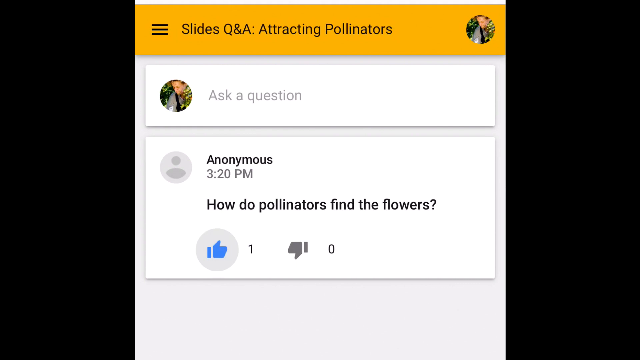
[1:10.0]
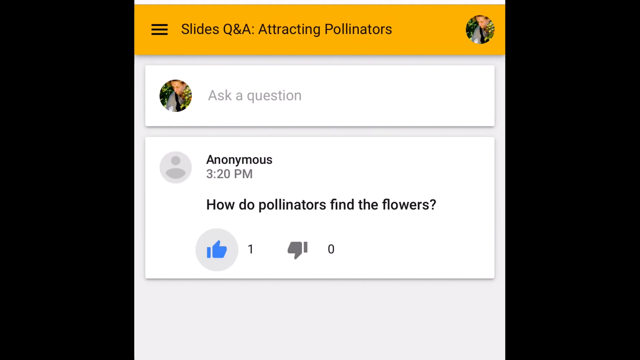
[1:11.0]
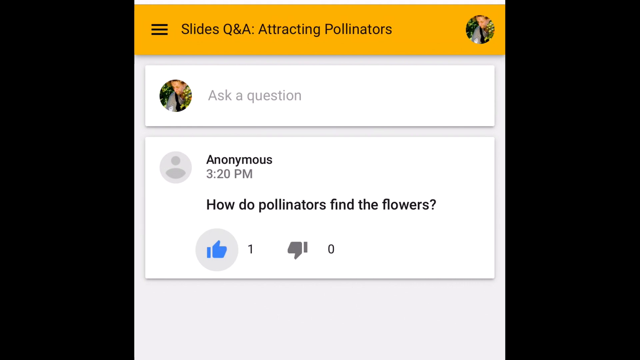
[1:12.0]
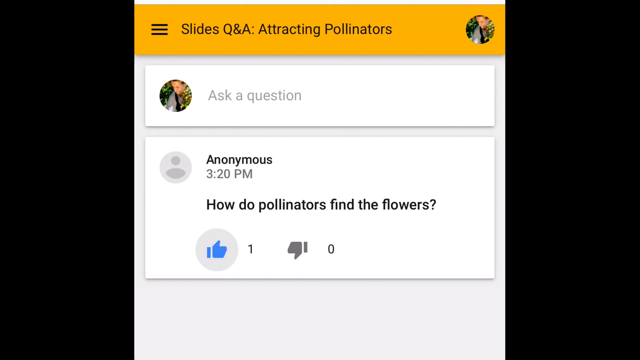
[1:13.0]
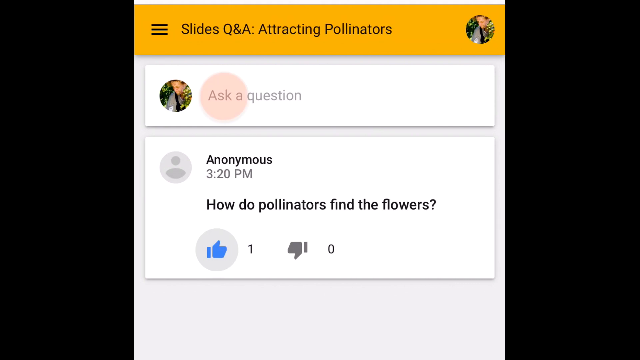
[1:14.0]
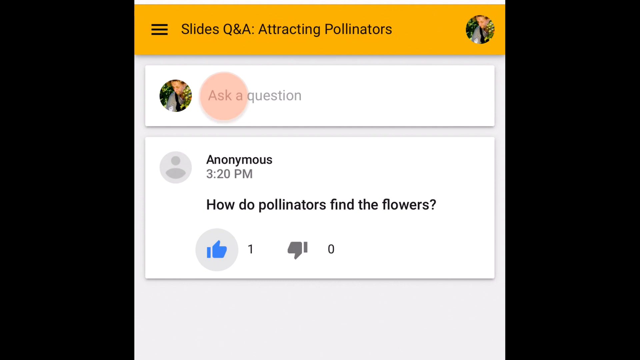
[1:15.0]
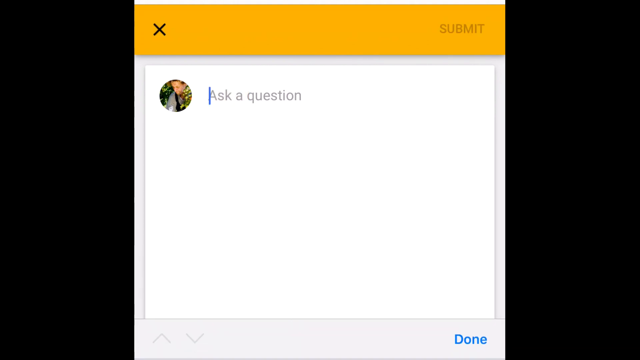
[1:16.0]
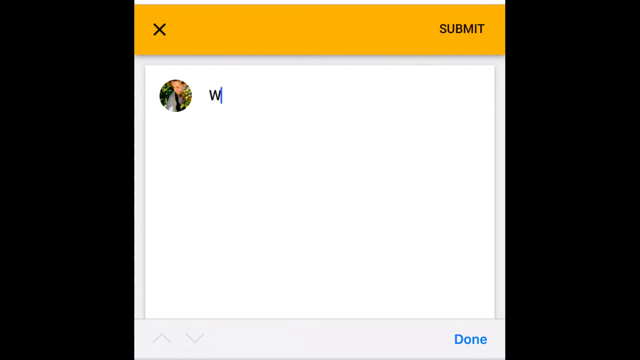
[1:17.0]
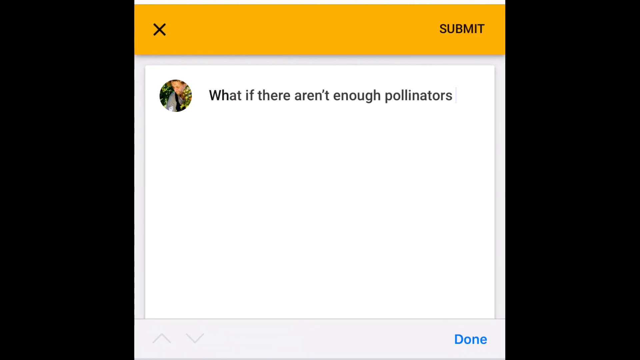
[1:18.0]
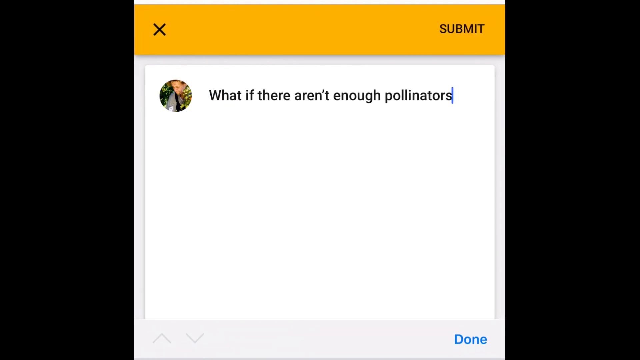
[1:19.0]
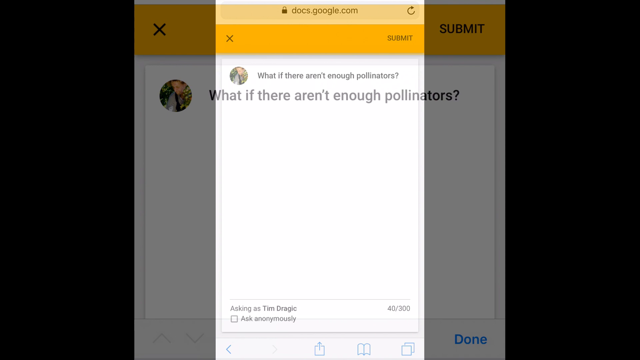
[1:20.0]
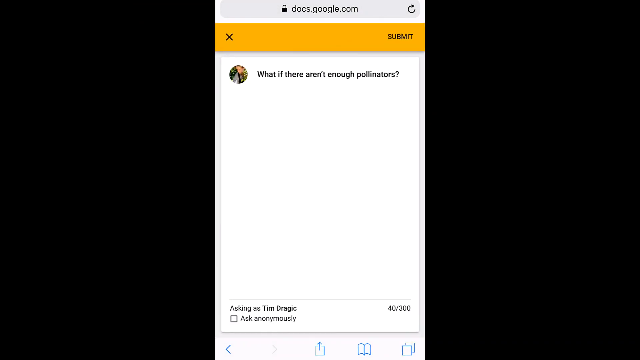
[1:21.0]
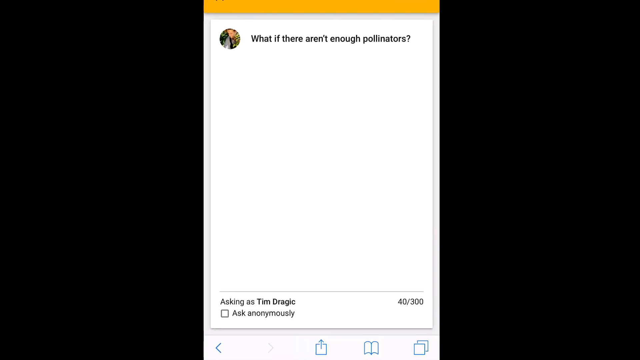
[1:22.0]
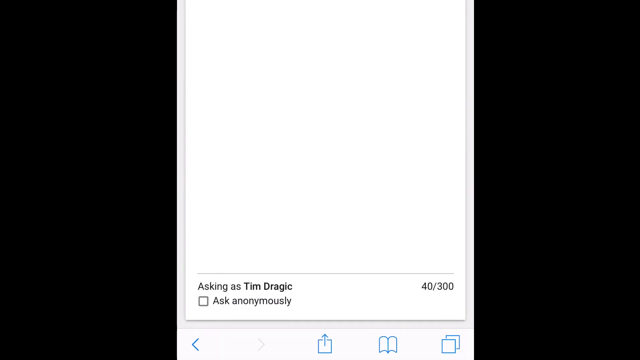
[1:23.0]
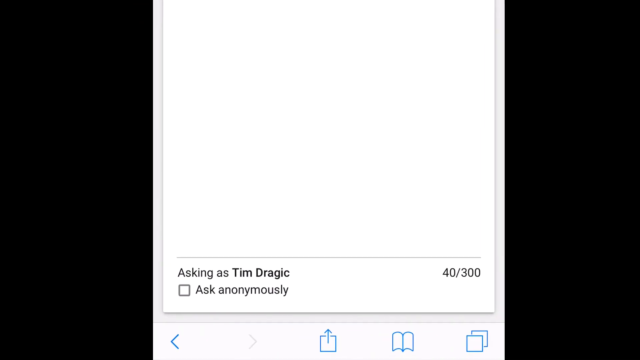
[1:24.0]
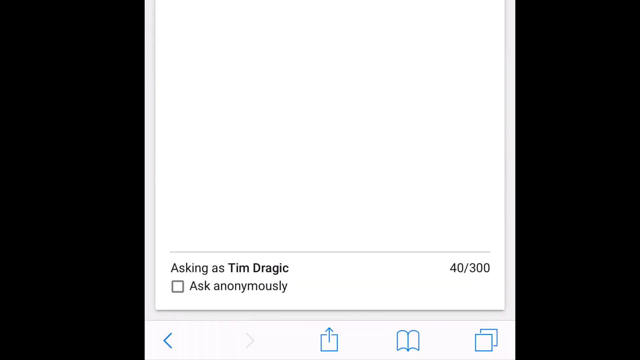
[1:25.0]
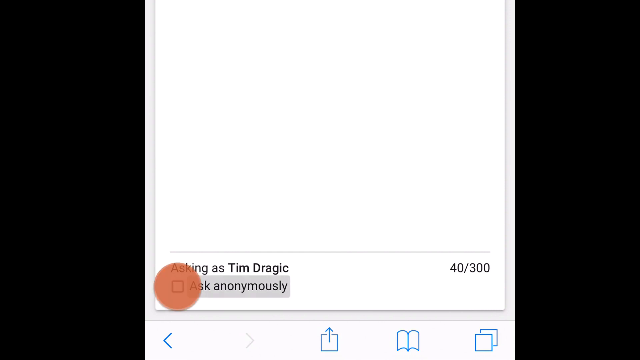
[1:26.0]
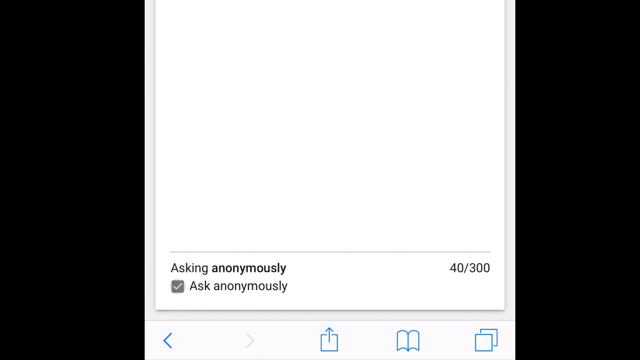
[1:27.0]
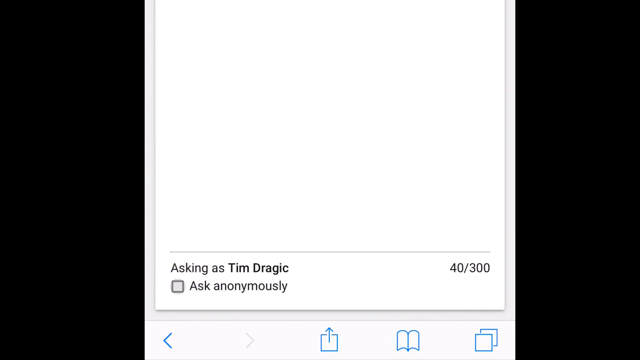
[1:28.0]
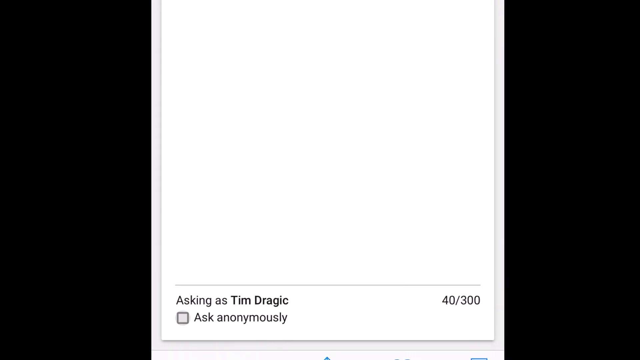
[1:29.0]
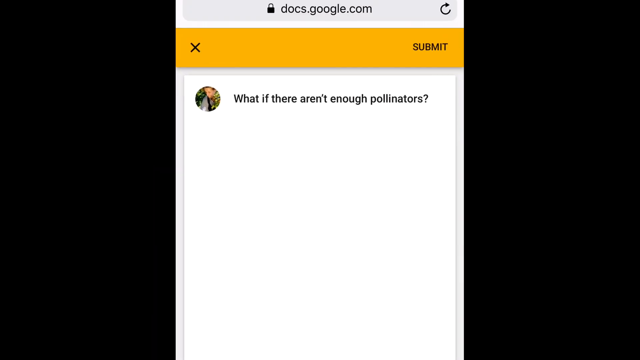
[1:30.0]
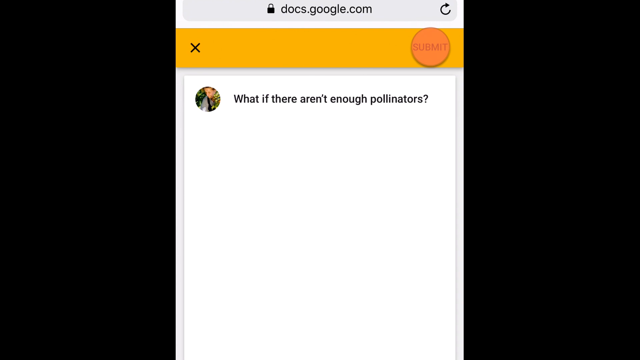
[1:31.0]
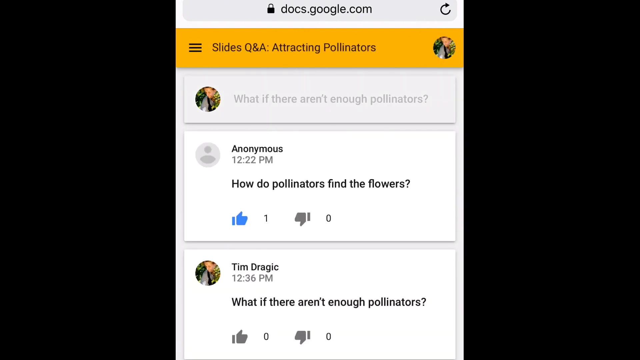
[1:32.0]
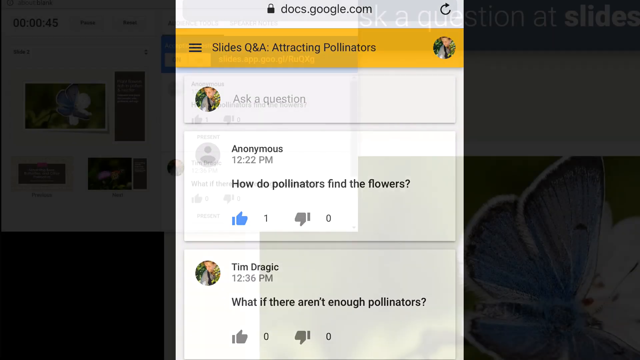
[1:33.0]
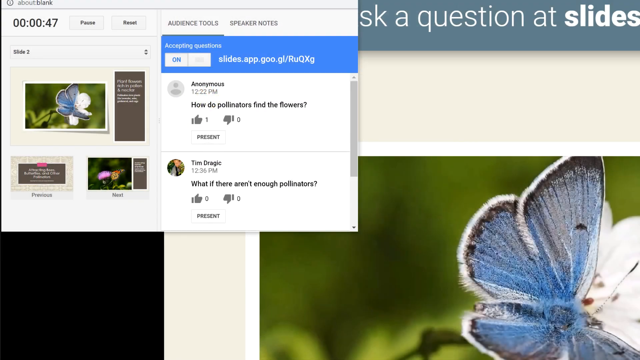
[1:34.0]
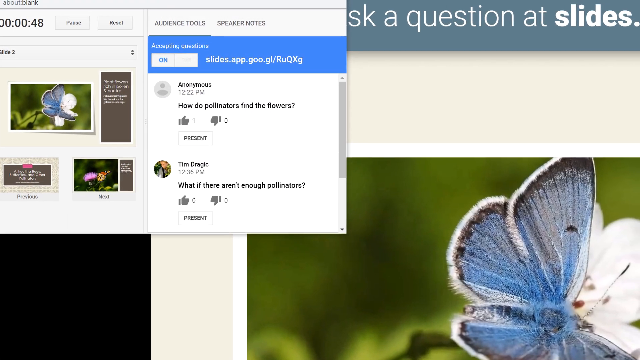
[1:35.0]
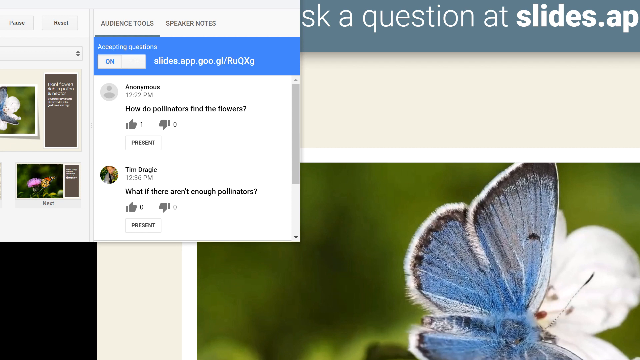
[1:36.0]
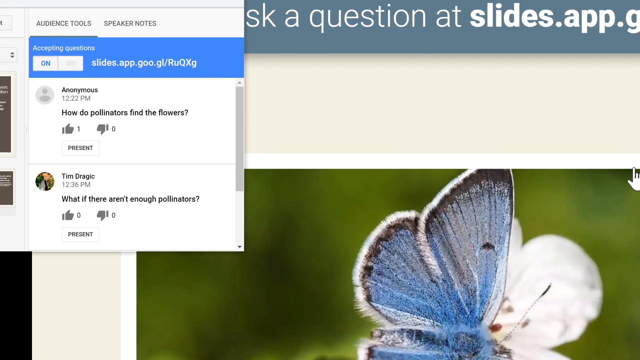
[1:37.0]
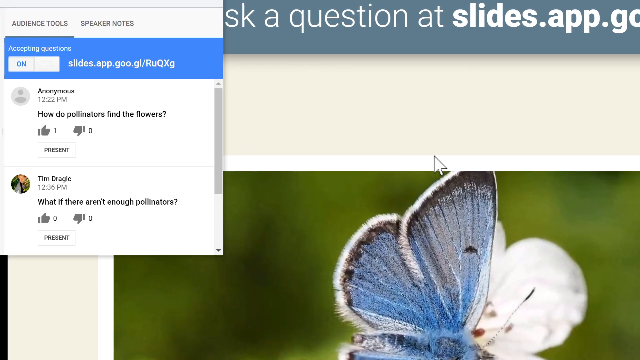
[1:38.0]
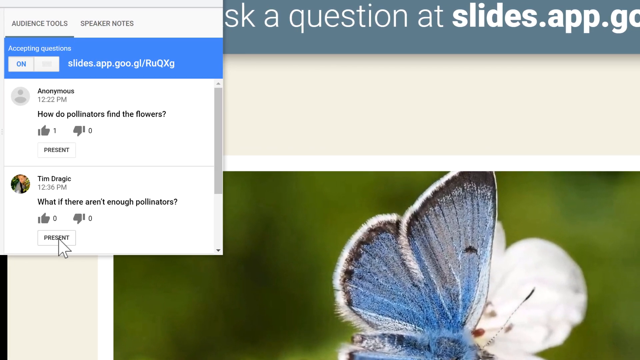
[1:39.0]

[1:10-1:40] A mobile screen shows an orange background at the top with a burger icon on the left followed by "slides Q&A attracting pollinators" in black, and a profile picture with a person's face at the right end. Below, the main area is divided into two rectangles, the first smaller than the second. The first rectangle has the profile image followed by "ask a question" in grey. Below it, an empty profile picture spot with a person head icon is followed by "anonymous 3.20 PM", then the question "how do pollinators find the flowers?", with like and dislike buttons beneath. The like button is already clicked and its count is one, while the dislike count is zero. A round pink pointer is used in the video. The pointer clicks the first rectangle, the cursor blinks, and "What if there aren't enough pollinators" is typed; the screen then zooms out. The bottom portion of the screen is zoomed in, showing a checkbox to ask anonymously, which is checked and unchecked. The submit button on the right side of the top orange banner is clicked, and the new question is posted, appearing below the anonymous user's first question. The presentation slide is shown again, and the questions appear in the dialog box open in the top left.